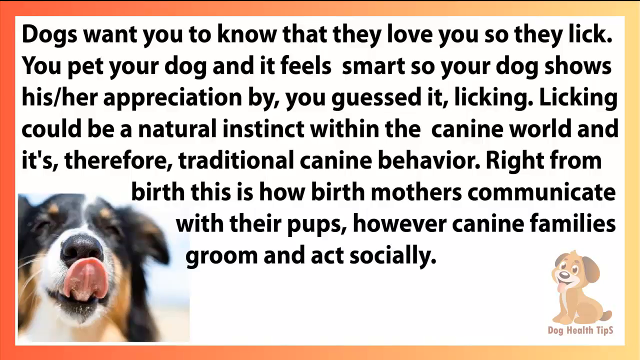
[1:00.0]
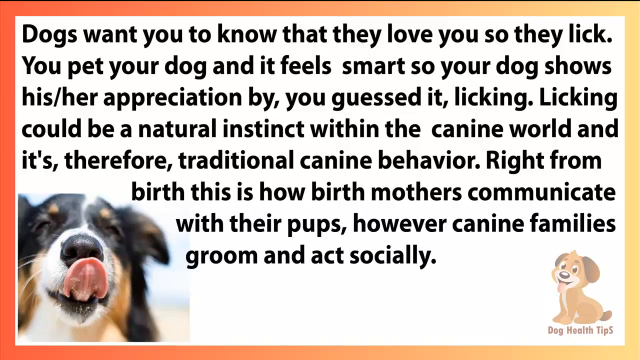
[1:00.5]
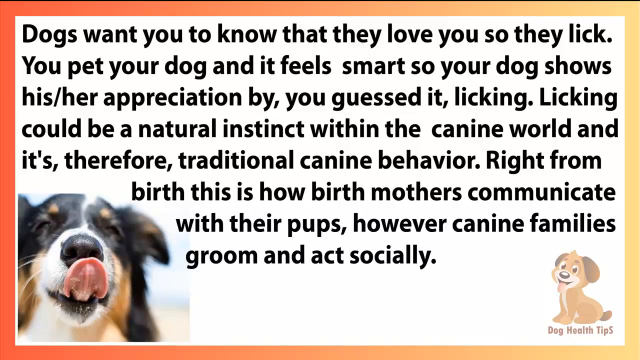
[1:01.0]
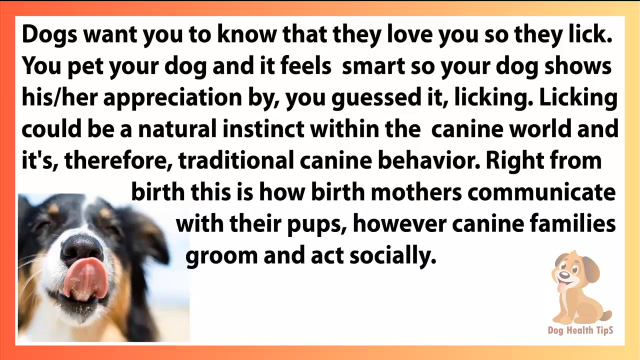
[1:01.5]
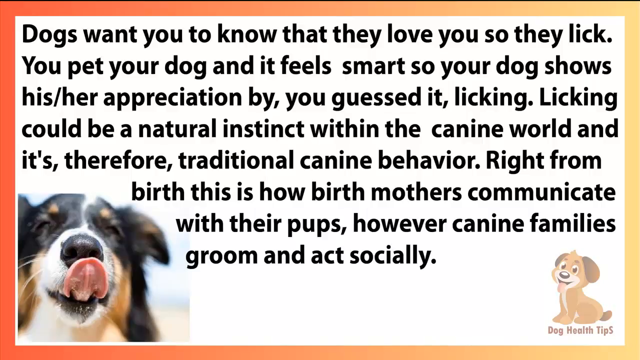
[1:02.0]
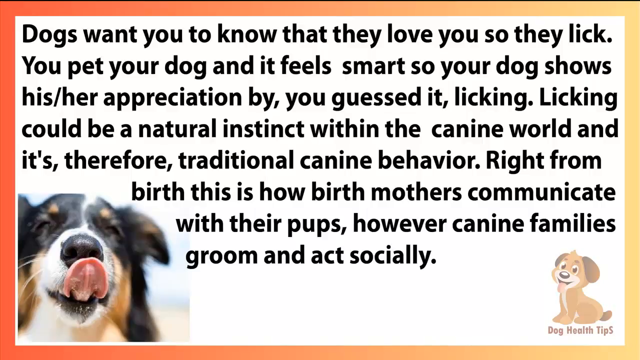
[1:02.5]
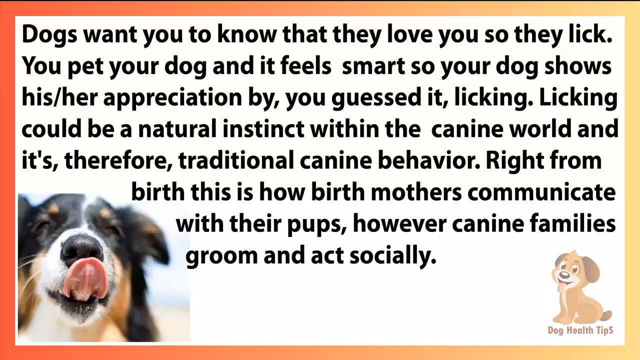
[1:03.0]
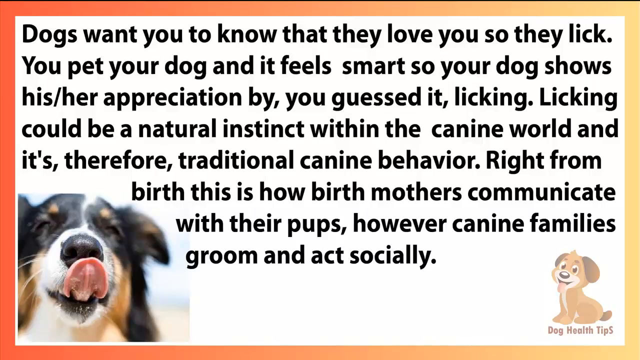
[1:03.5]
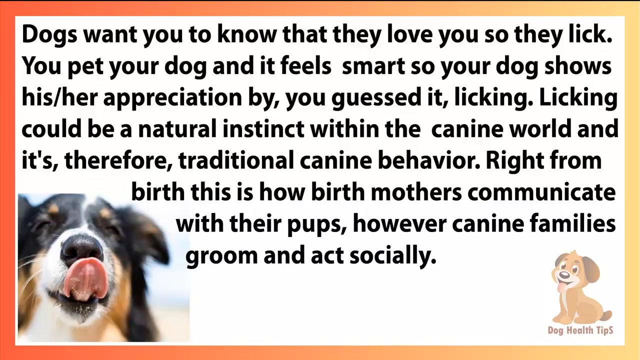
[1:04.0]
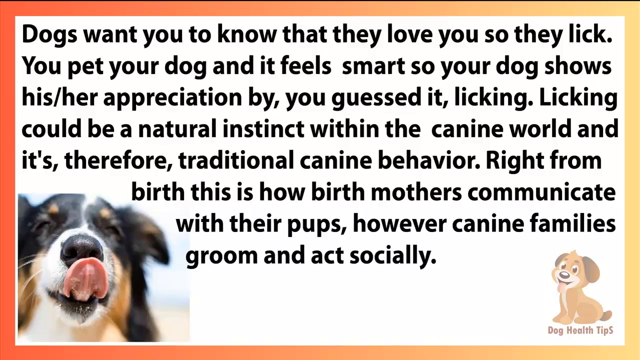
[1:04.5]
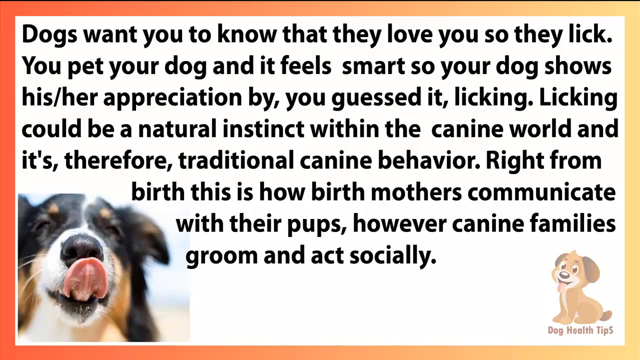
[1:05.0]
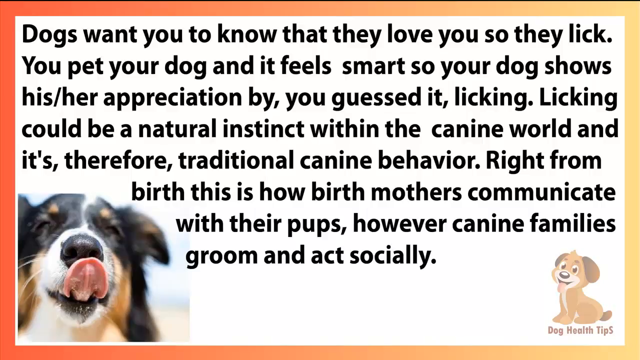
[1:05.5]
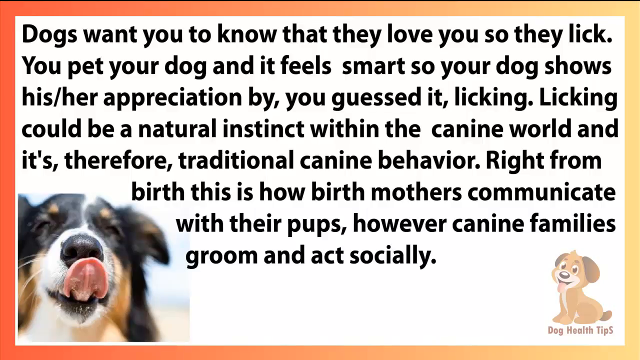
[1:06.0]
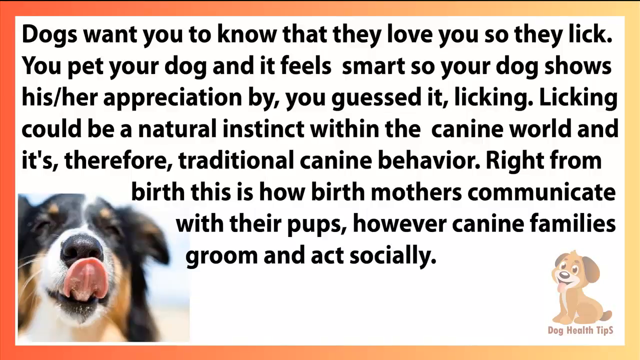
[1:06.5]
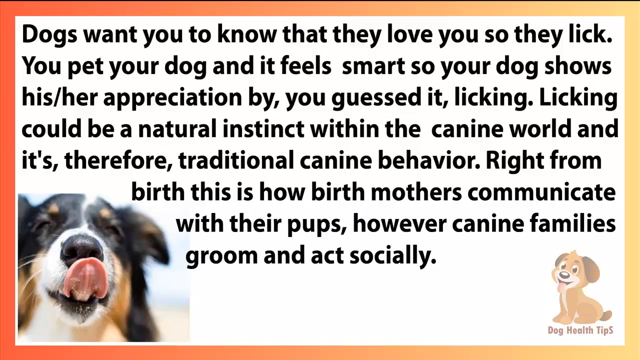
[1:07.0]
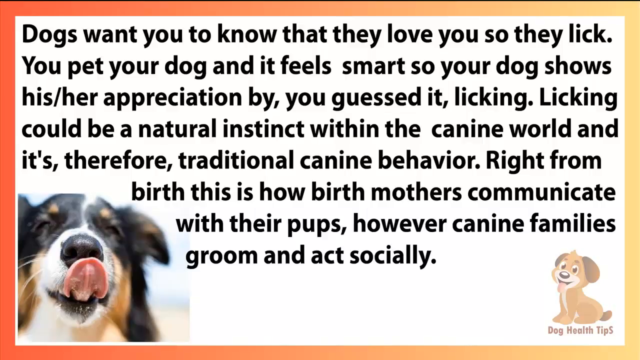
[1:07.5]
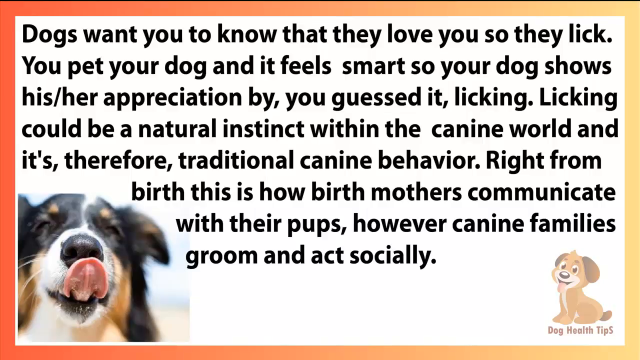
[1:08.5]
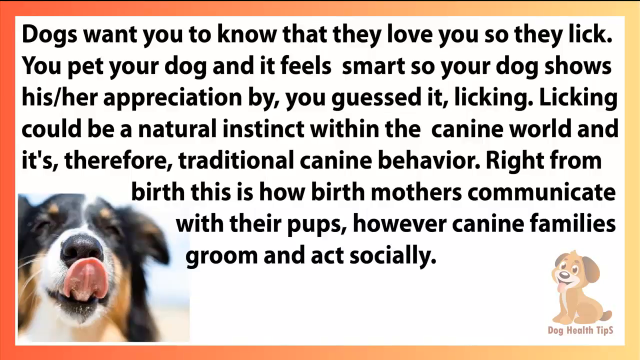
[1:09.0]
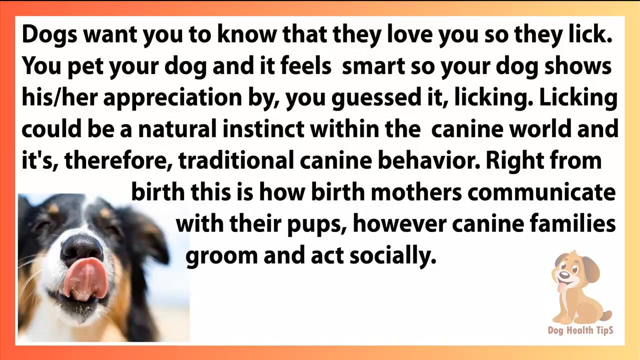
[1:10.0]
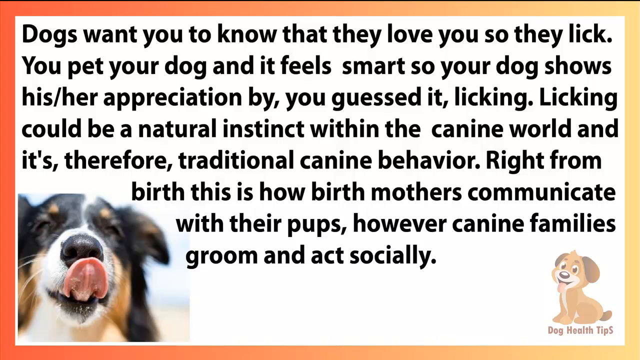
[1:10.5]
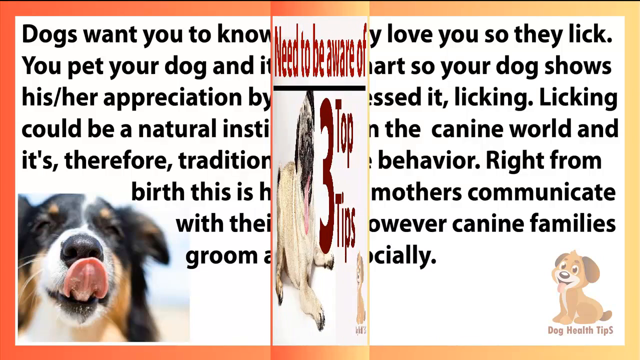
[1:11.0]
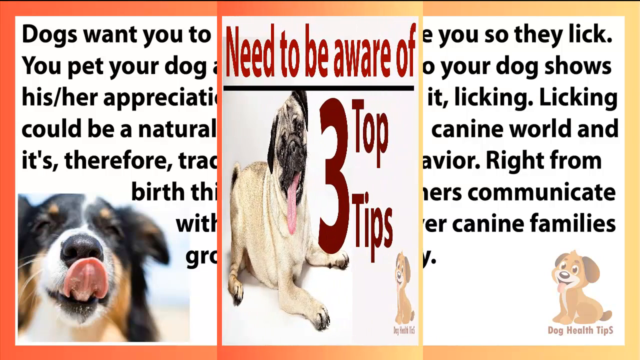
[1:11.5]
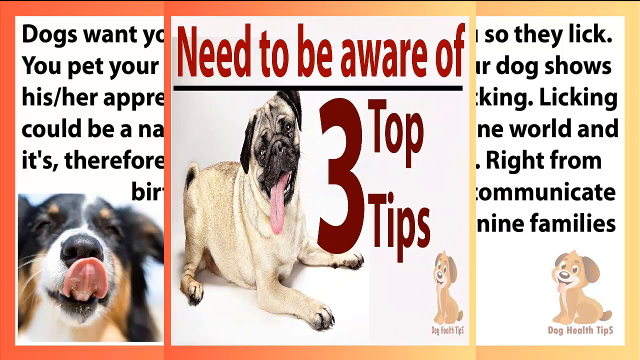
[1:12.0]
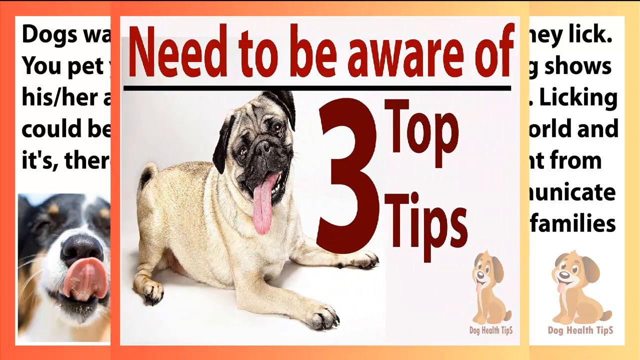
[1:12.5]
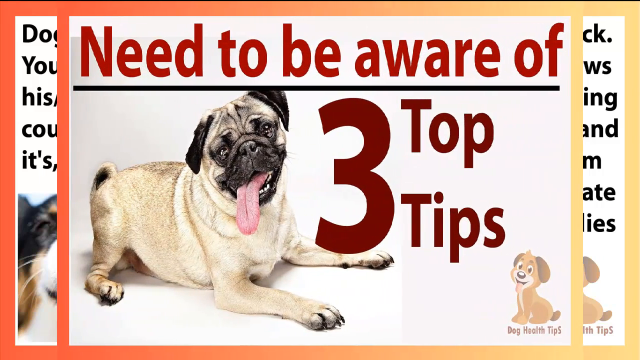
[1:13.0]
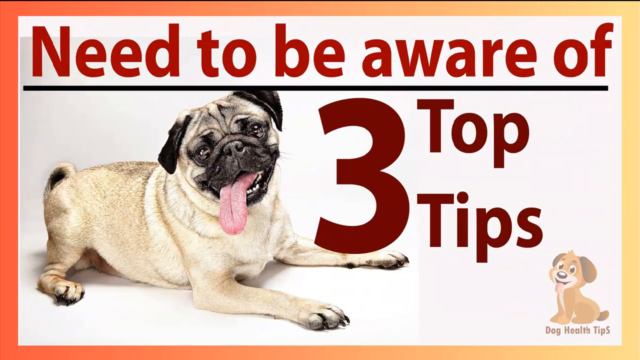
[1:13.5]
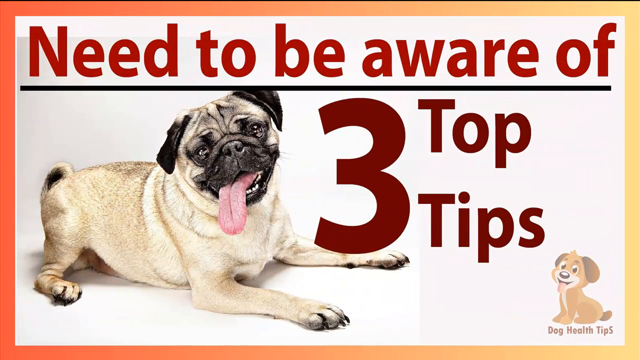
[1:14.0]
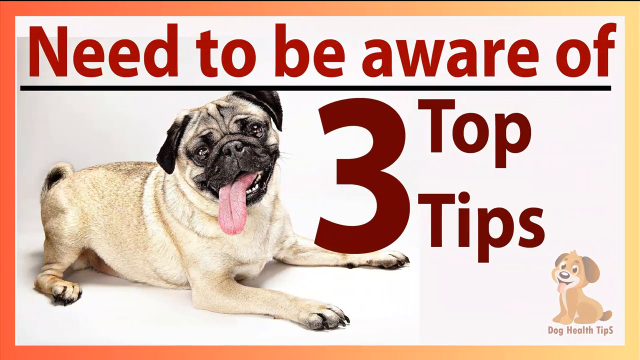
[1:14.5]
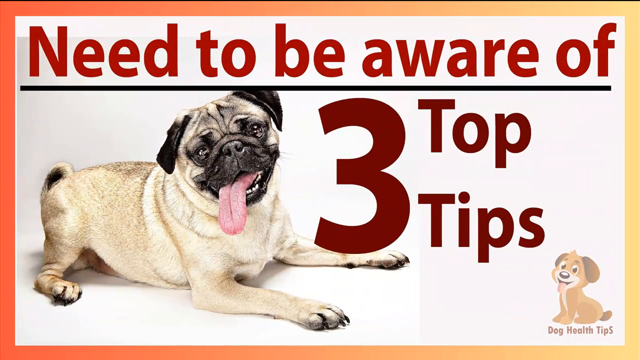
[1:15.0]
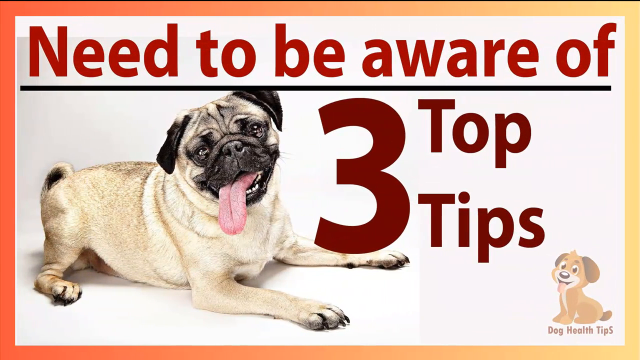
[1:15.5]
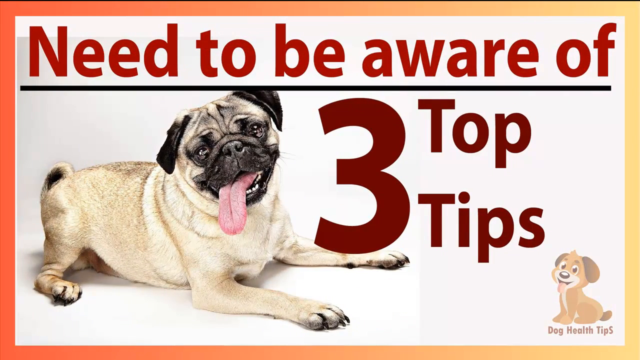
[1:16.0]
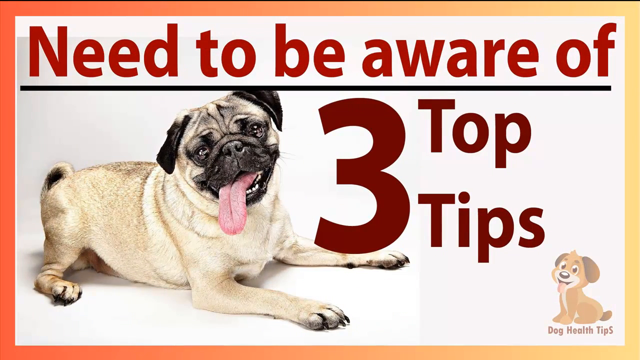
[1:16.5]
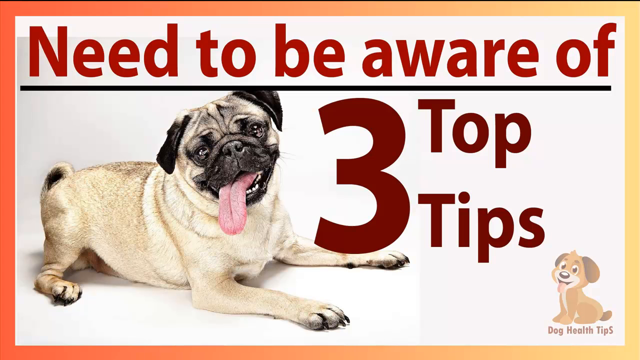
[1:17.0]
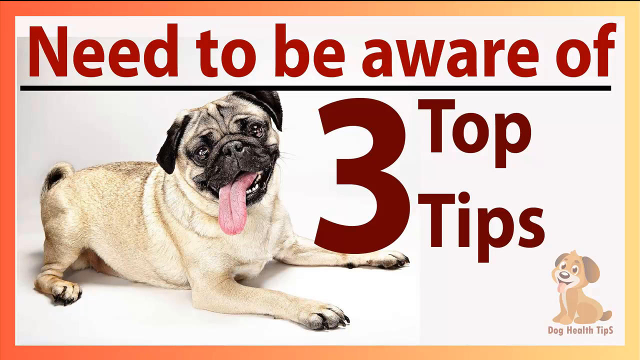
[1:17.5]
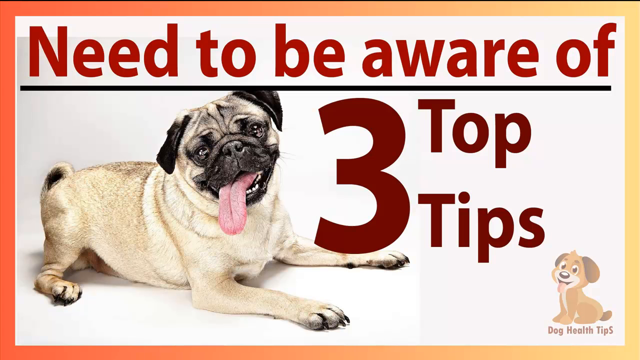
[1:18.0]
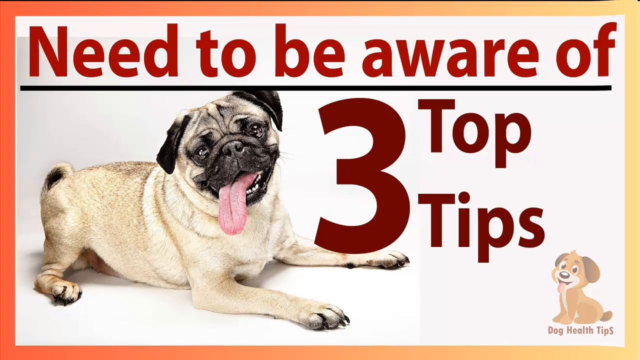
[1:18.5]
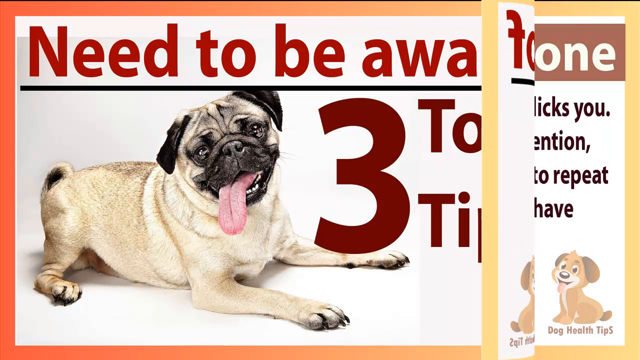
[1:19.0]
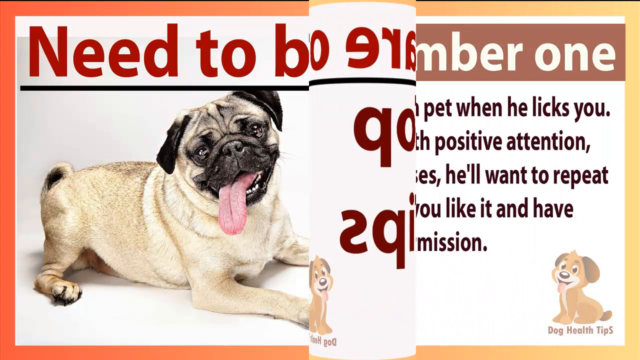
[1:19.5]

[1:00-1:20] A white background carries text that reads "Dogs want you to know that they love you so they lick" and continues: "So your dog shows his her appreciation by you guessed it licking. Licking could be a natural instinct within the canine world and it's therefore traditional canine behaviour. Right from birth this is how birth mothers communicate with their pups. However canine families groom and act socially." A cartoon dog logo is in the bottom right-hand corner, and in the bottom left-hand corner is a picture of a dog licking, with his tongue out, licking his nose. The screen's border is kind of ombre, starting red, going into orange and then yellow. The screen then changes to a picture of a pug laying down, with text reading "need to be aware of. Three top tips."